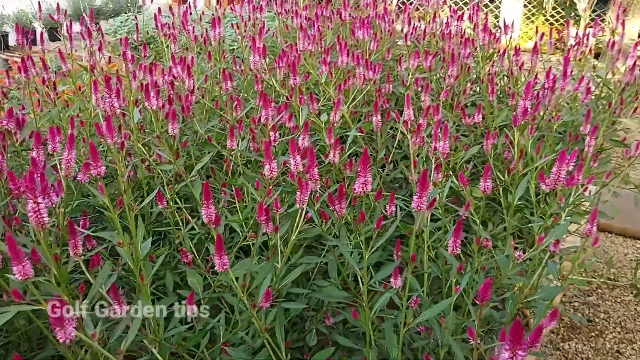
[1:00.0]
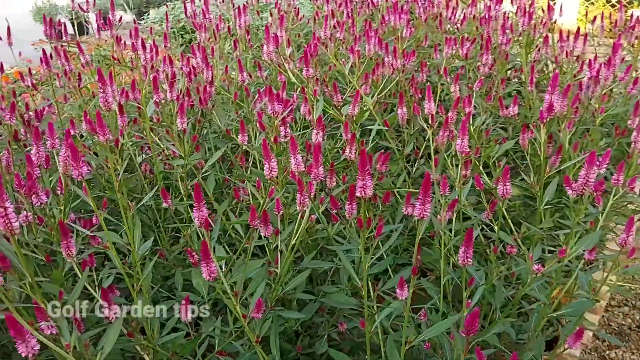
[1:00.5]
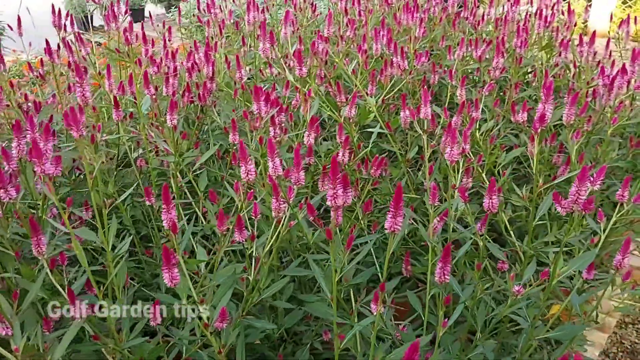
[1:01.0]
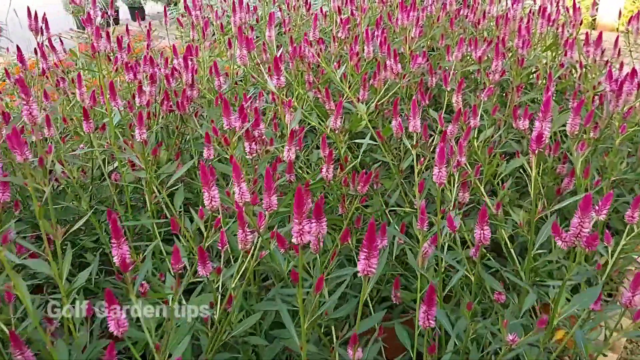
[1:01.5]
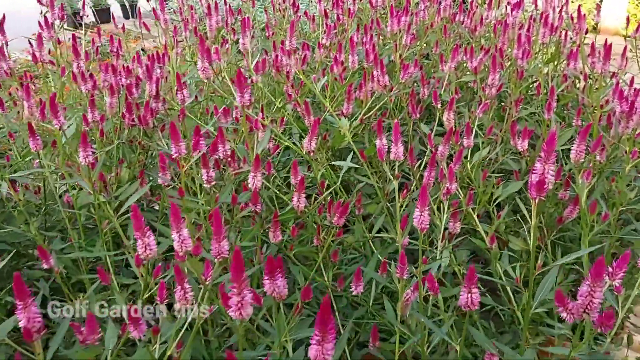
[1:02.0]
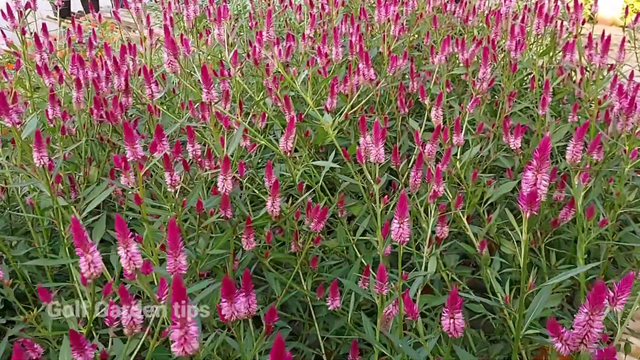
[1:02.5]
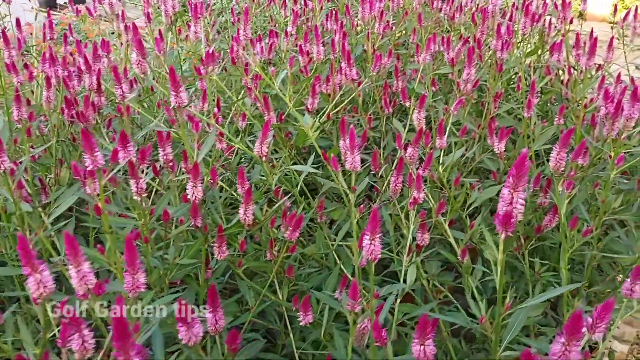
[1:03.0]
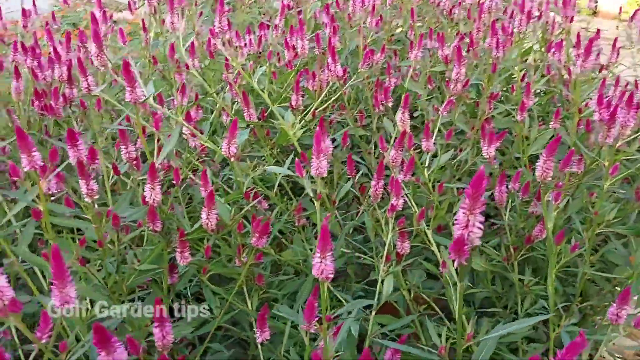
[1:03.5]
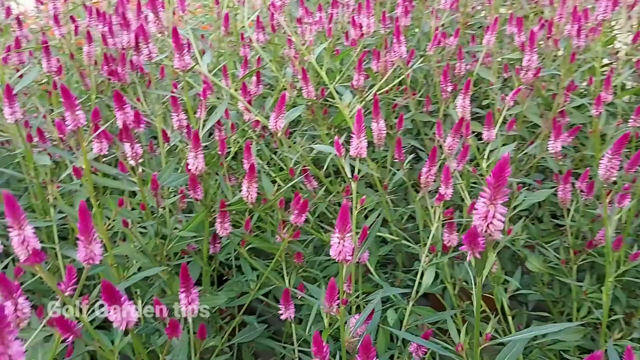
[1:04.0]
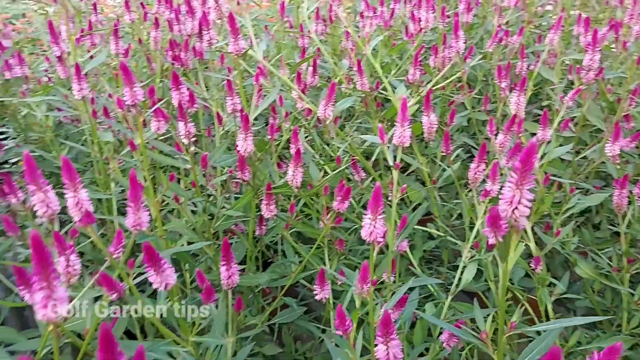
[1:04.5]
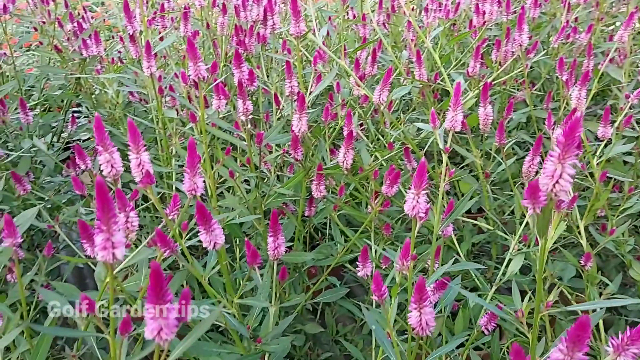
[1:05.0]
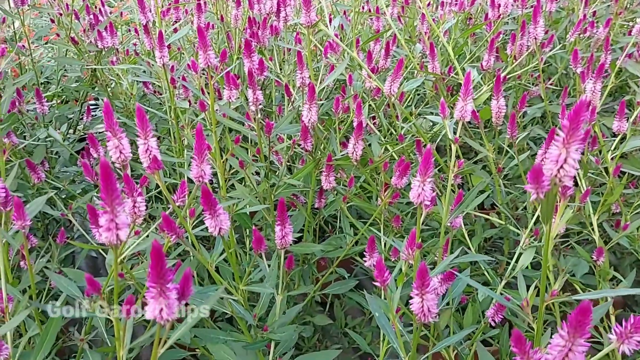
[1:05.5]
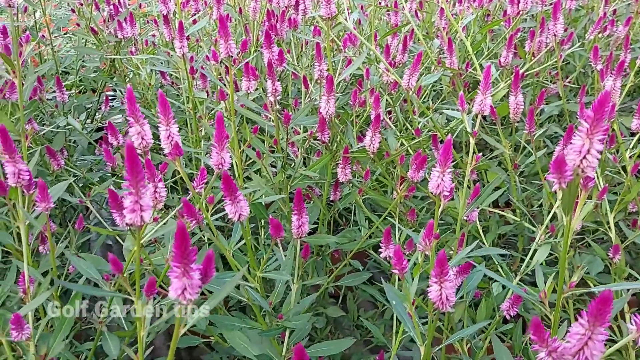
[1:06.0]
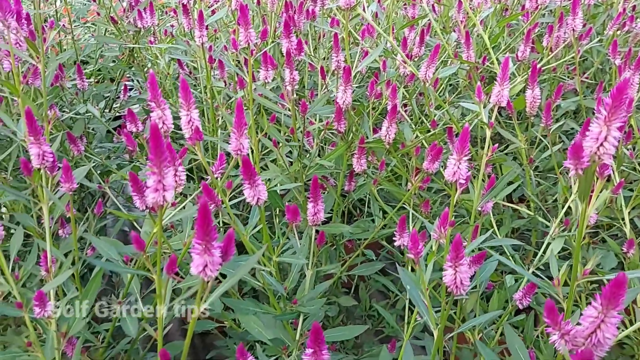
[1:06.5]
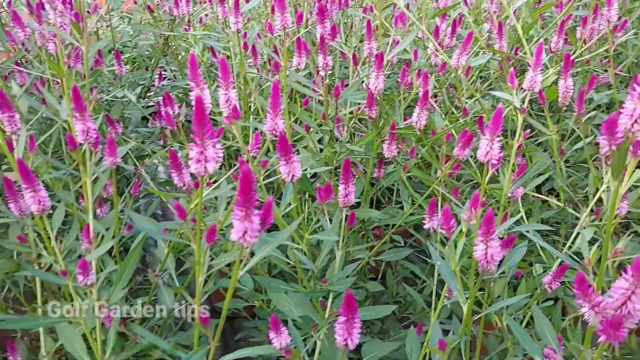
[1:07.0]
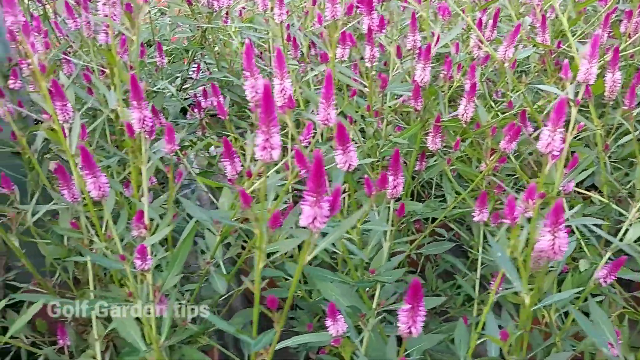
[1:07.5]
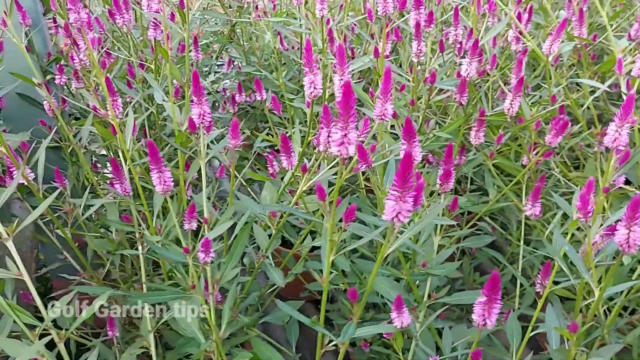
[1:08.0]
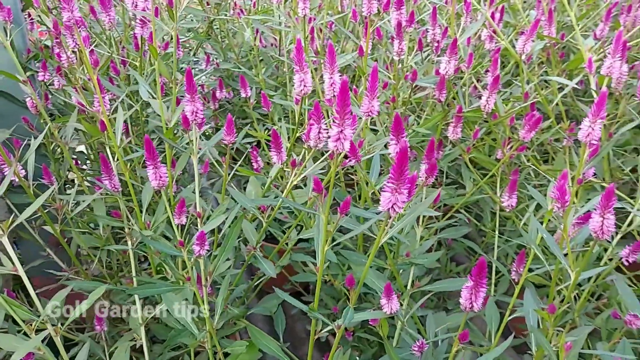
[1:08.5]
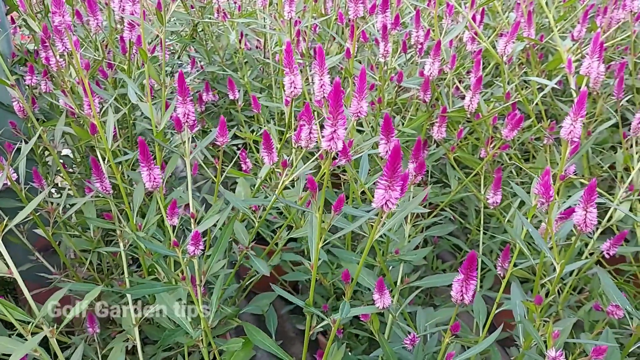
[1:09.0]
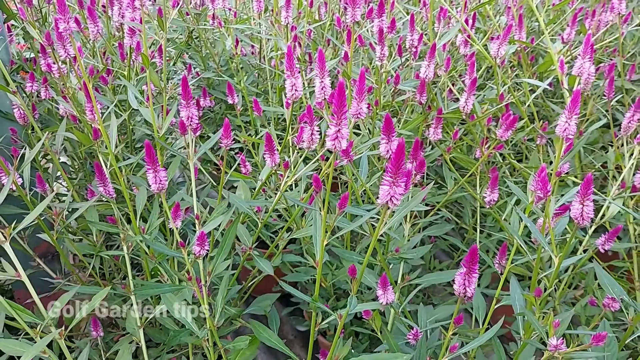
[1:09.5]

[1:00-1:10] The camera person pauses again at the end of the row, showing the gravel floor of the nursery. They step over a section of the plants and try to show the bottom half where flowers are also growing, then pan back up to the top of the row. More marigolds appear in the background, and the plant itself has red and pink buds, with a base of primarily green leaves in different shapes. The nursery is pretty much empty apart from the child who ran by earlier. Toward the back wall there is trellis and separation, almost as if the area is gated off. Toward the back where the marigolds are, there is a clear but privacy-screened greenhouse wall, as though the area is partially walled in, and back toward the front is the street.